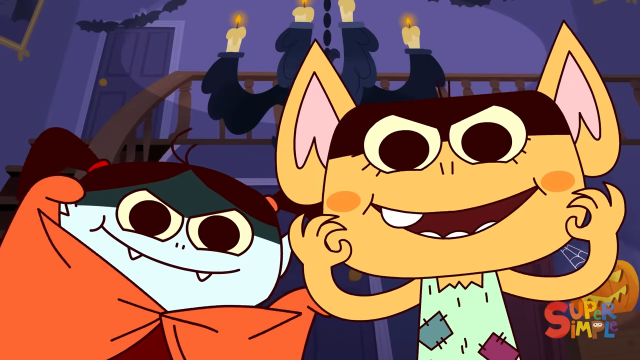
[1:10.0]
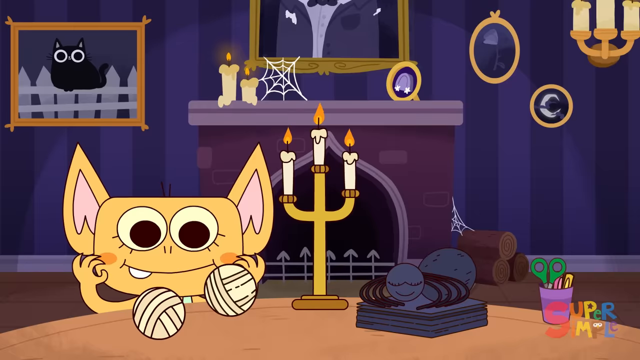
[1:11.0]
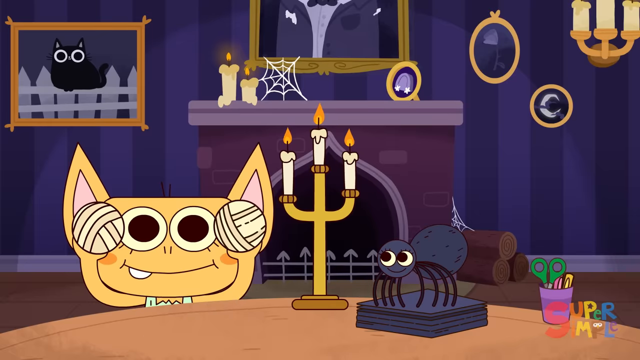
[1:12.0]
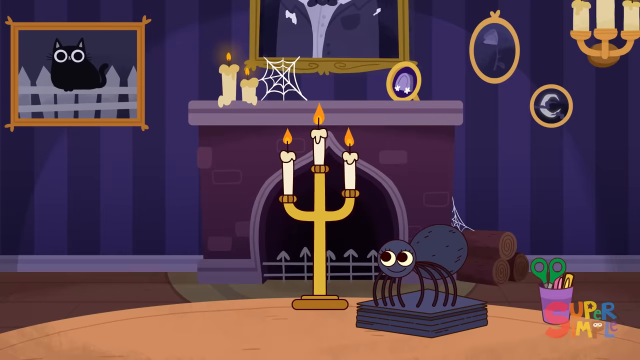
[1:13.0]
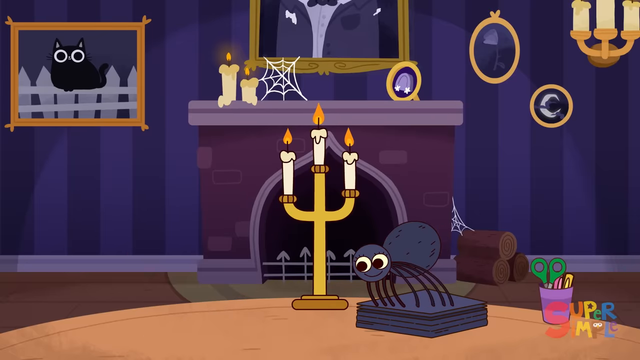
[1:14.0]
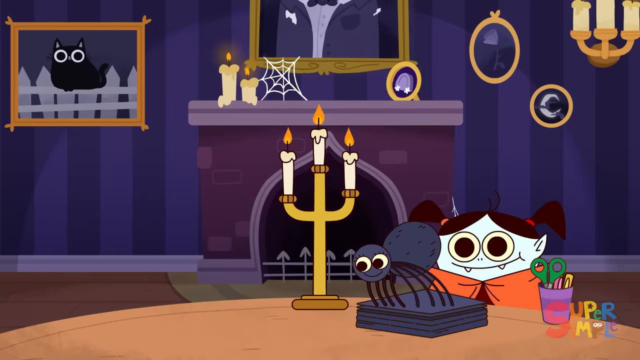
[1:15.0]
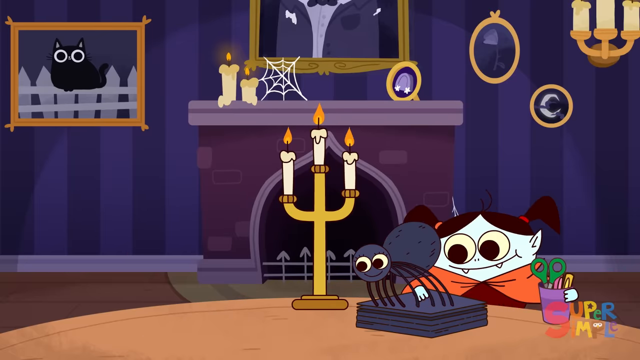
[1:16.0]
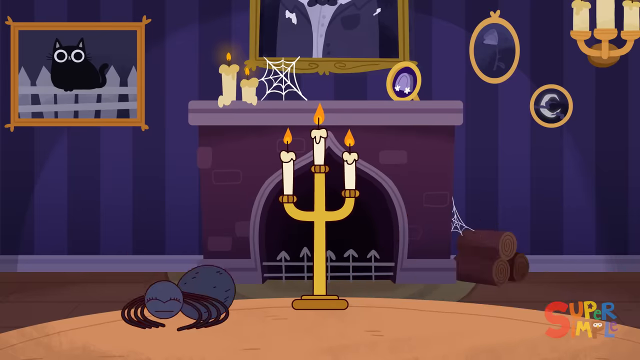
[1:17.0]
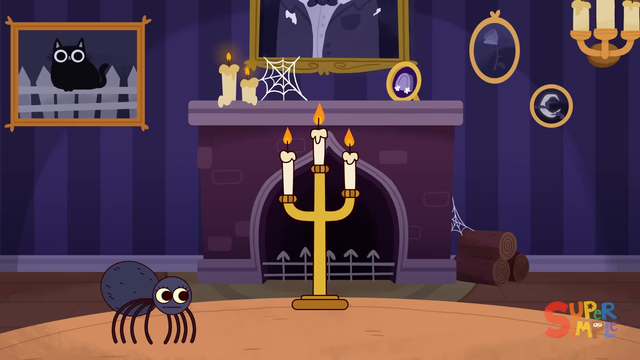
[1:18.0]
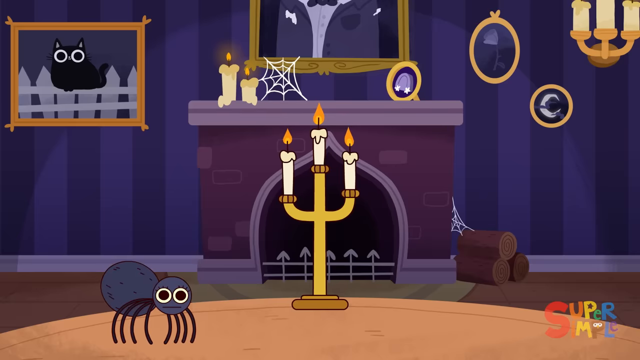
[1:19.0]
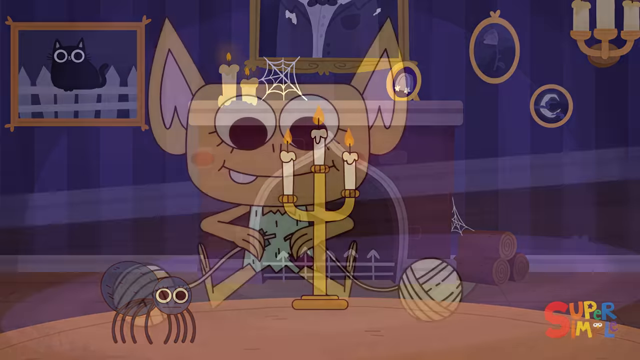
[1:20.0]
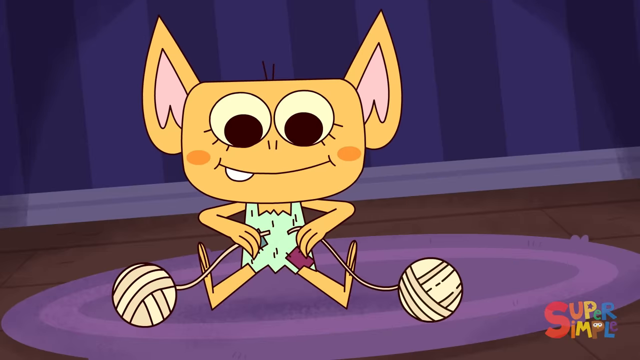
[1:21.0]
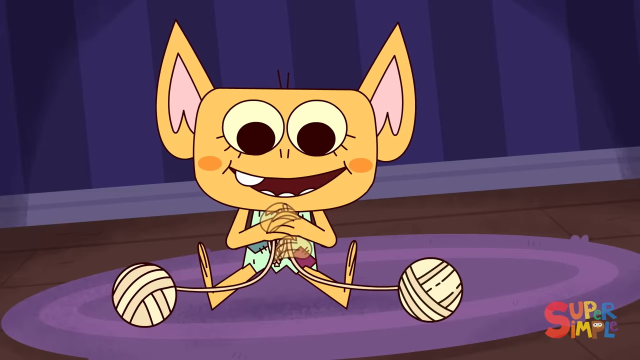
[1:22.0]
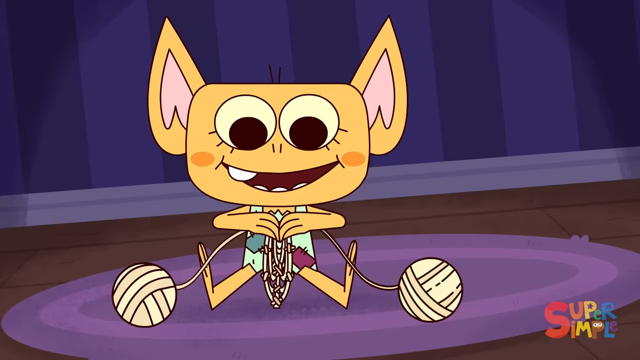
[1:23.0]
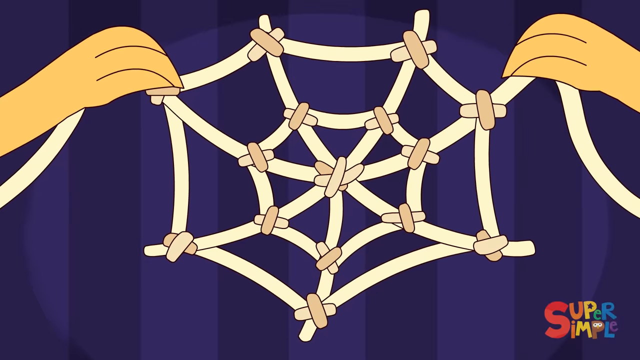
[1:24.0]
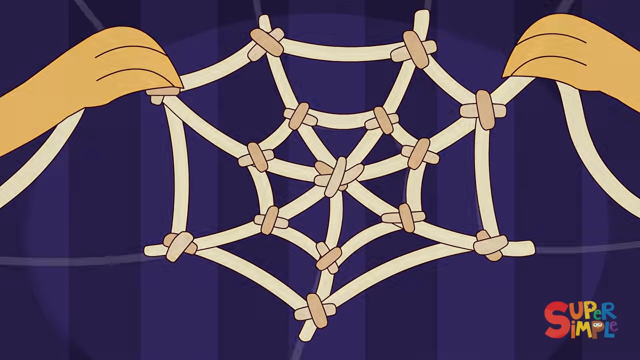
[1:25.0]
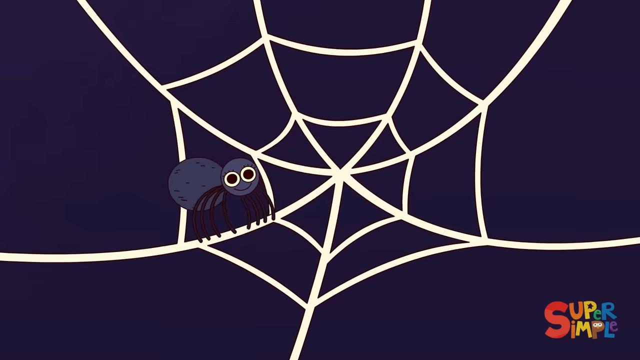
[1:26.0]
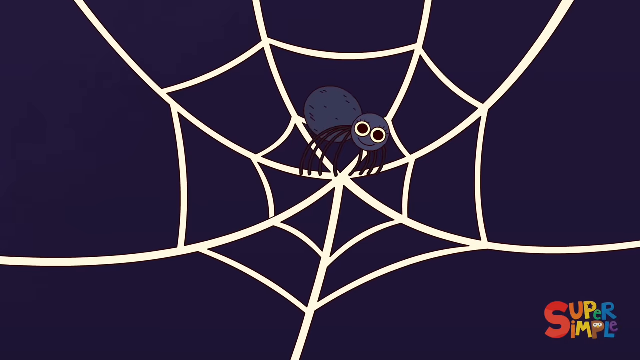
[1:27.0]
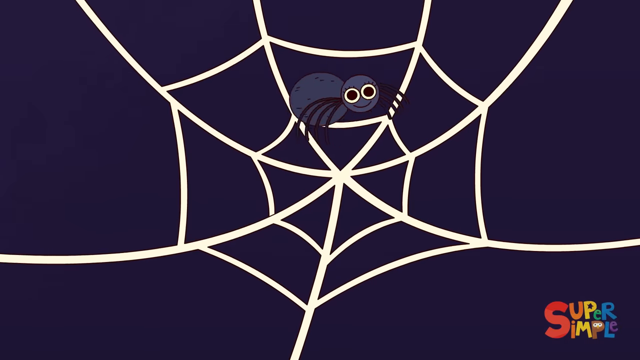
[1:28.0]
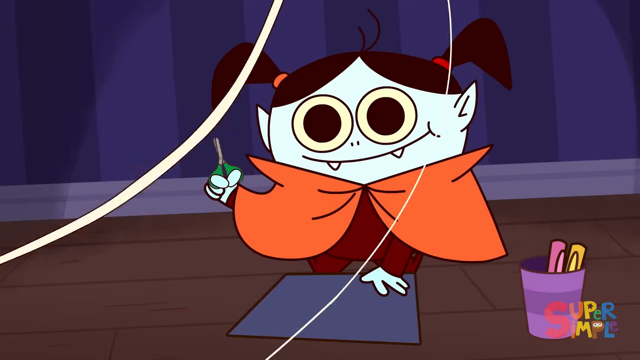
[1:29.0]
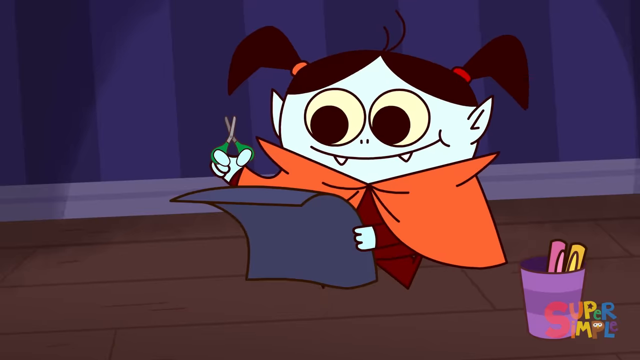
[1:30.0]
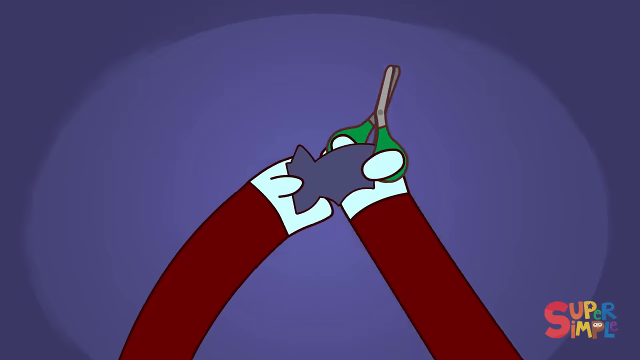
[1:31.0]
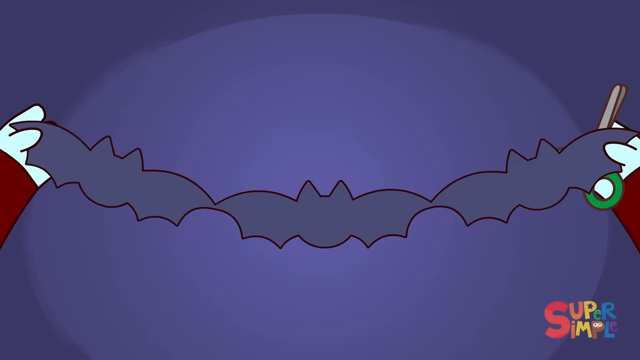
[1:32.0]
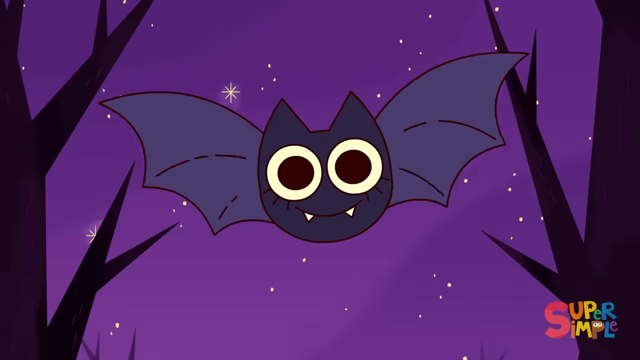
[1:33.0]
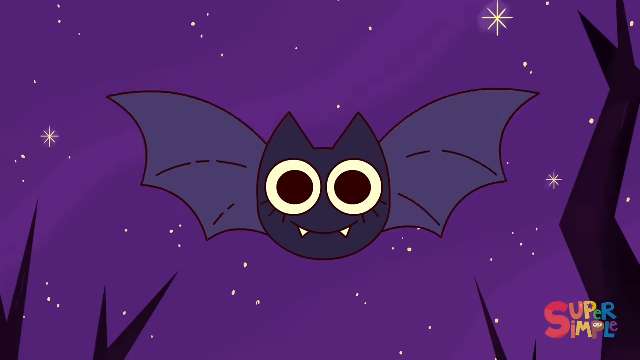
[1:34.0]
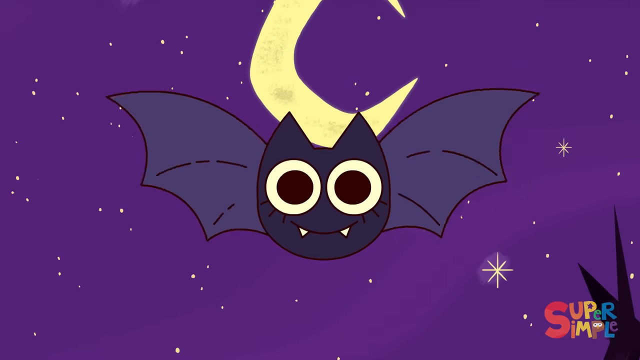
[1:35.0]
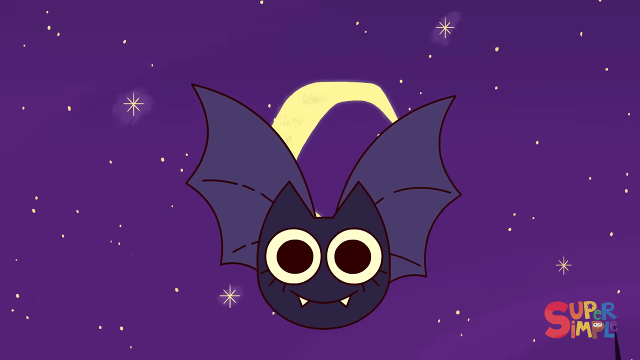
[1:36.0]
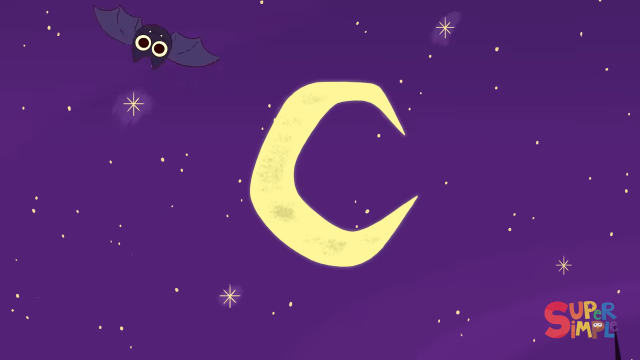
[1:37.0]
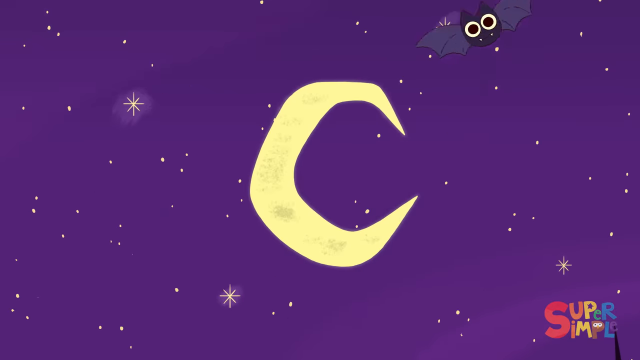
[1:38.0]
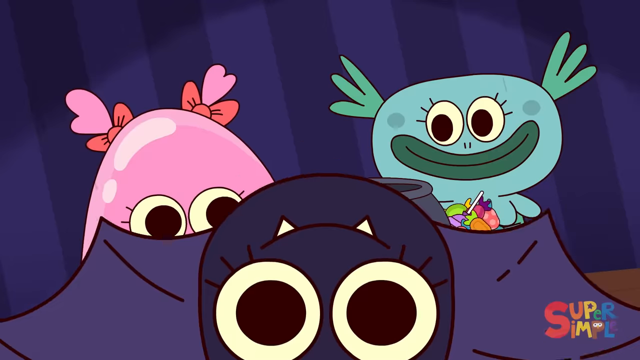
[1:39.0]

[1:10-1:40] The scene returns to the main table in what seems to be the dining room. The spider is standing on a stack of what may be construction paper, with a purple cup holding scissors, pencils and a ruler to the right of it. It is standing there with the bat, which has what appears to be two balls of yarn or two rubber band balls. The vampire character pulls the stack of paper from underneath the spider, causing it to flip and land on the paper in a very confused manner. The scene fades to the bat character weaving the yarn into a cobweb, which transitions to an actual cobweb woven by the spider. That transitions to the vampire character cutting out paper bats, which transitions to an actual bat flying through the night sky in front of the crescent moon, doing loop-de-loops around it, then flying into a wipe to two more creatures, kind of a pink blob creature and a bluish sea creature, with what appears to be a cauldron full of candy.